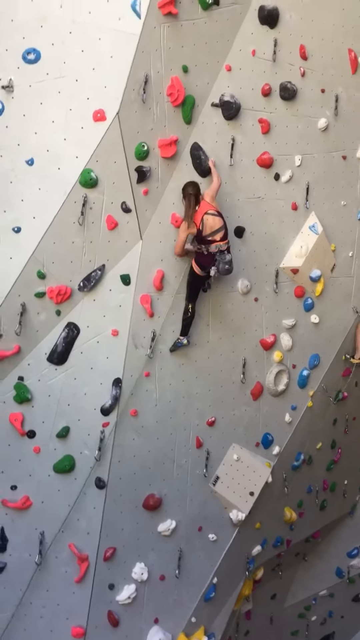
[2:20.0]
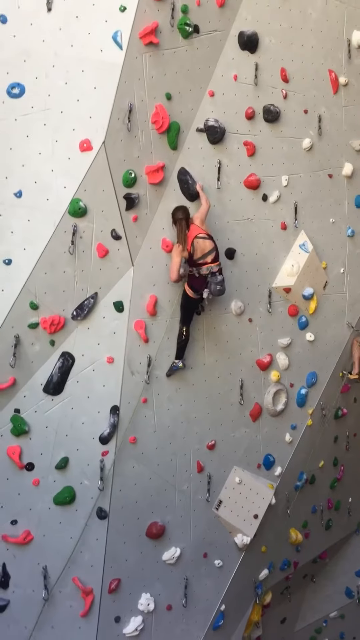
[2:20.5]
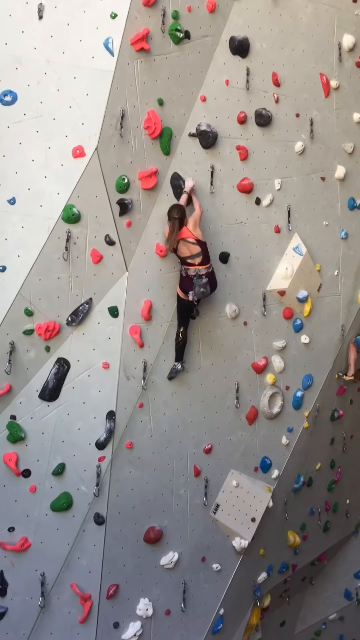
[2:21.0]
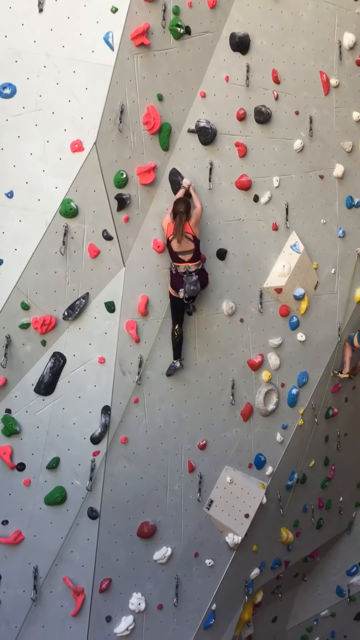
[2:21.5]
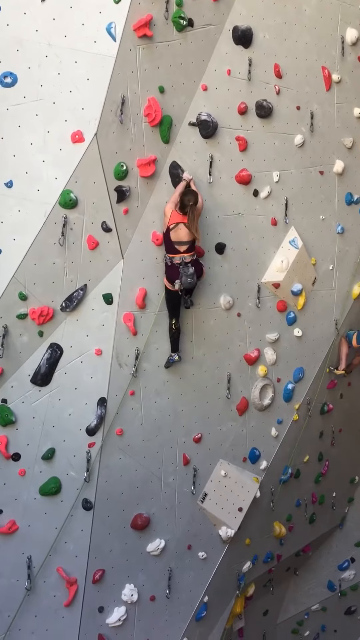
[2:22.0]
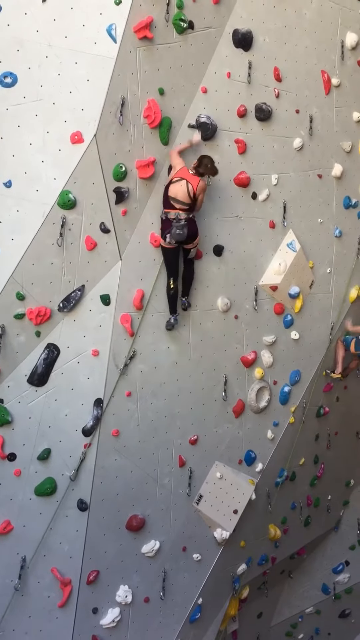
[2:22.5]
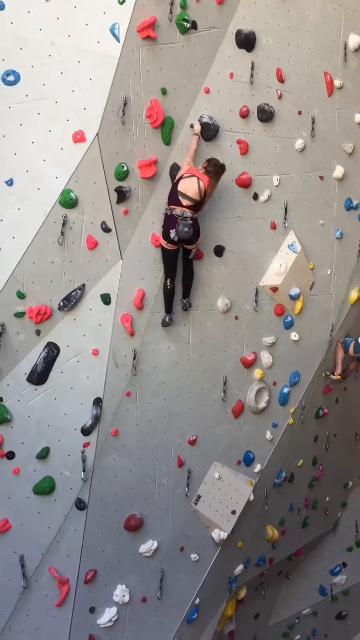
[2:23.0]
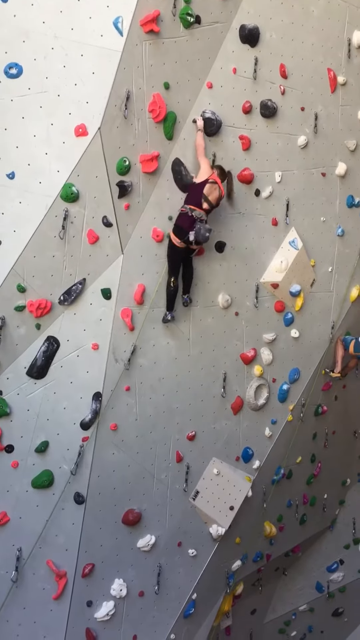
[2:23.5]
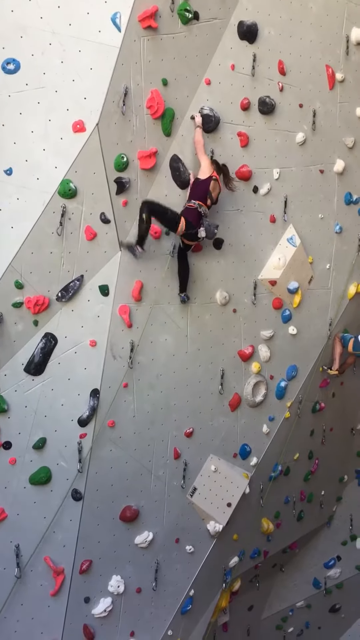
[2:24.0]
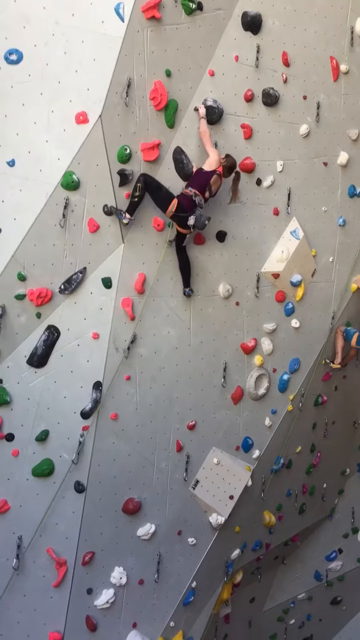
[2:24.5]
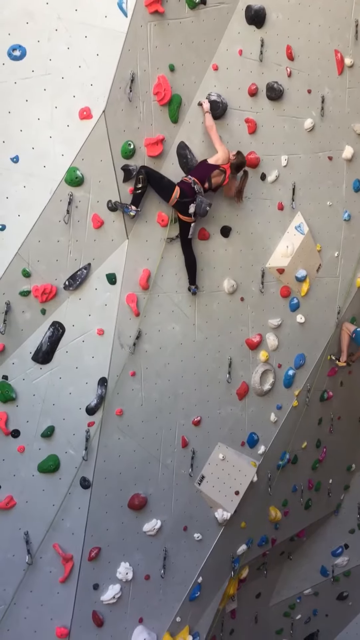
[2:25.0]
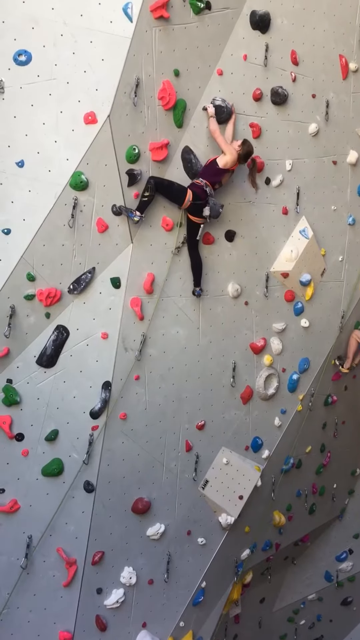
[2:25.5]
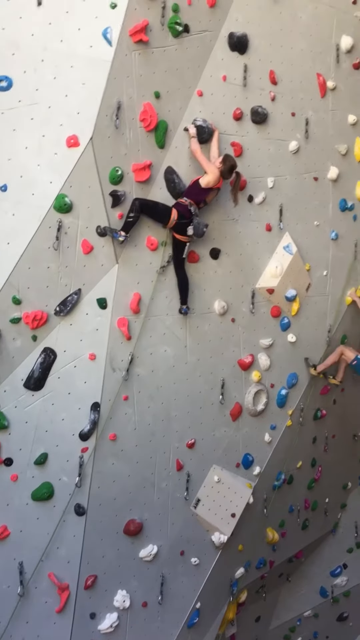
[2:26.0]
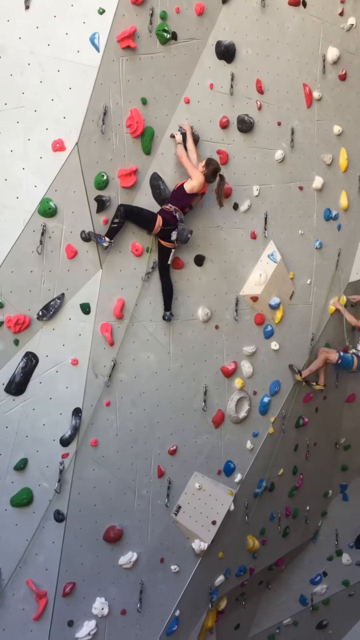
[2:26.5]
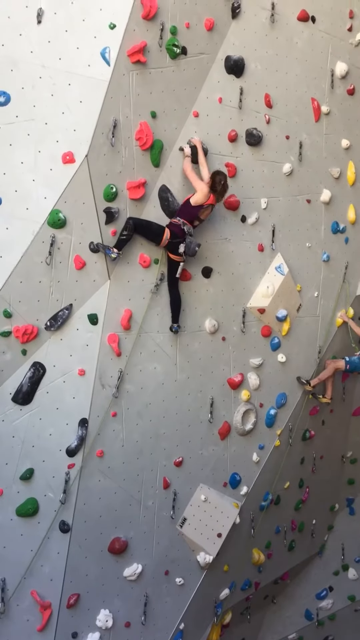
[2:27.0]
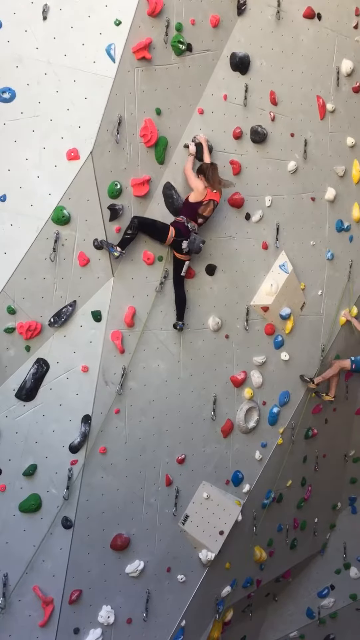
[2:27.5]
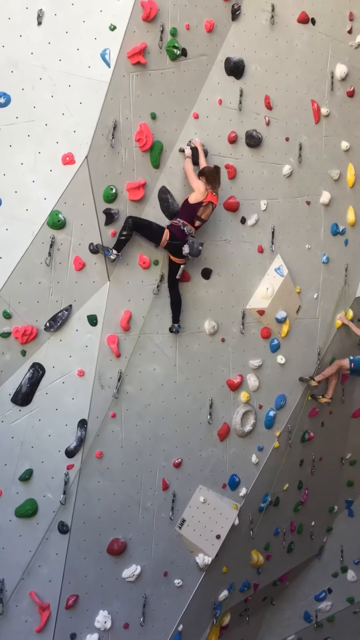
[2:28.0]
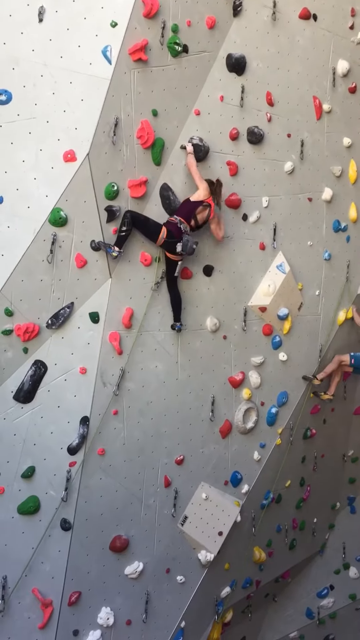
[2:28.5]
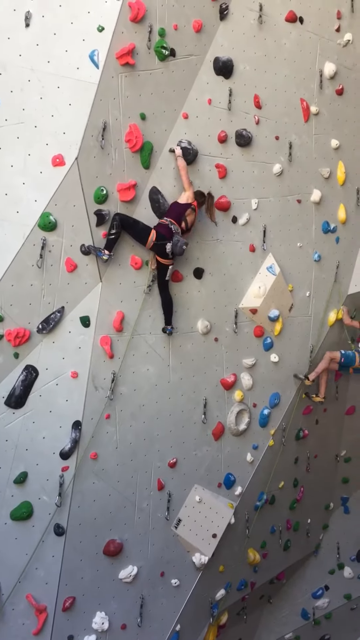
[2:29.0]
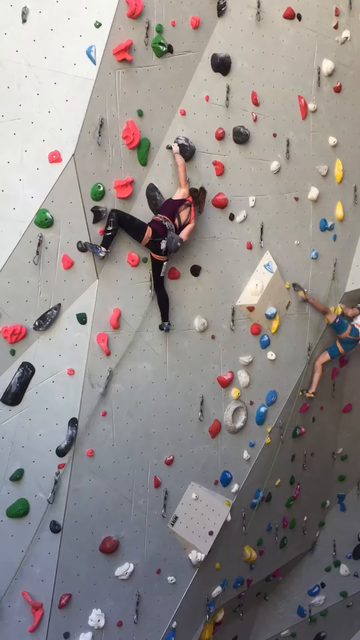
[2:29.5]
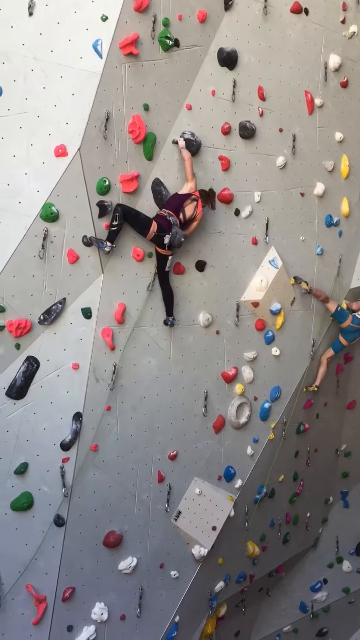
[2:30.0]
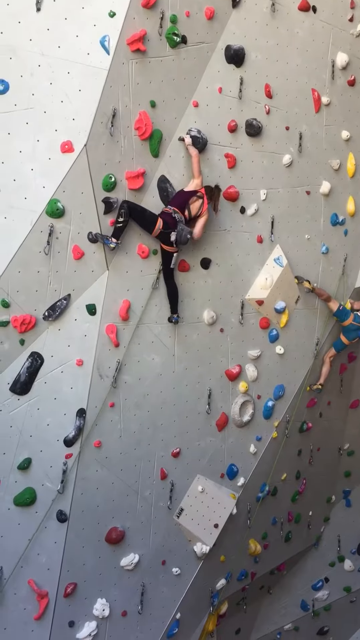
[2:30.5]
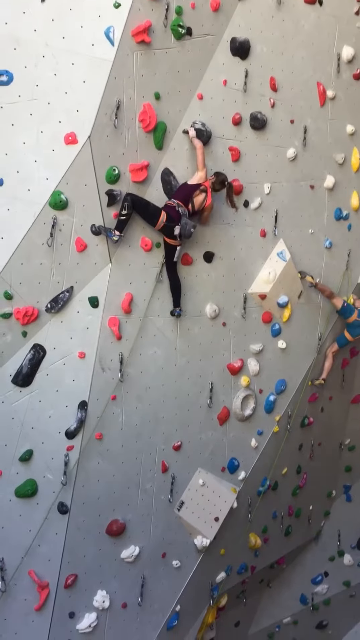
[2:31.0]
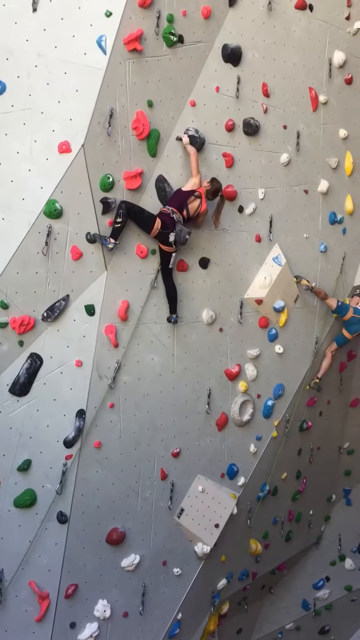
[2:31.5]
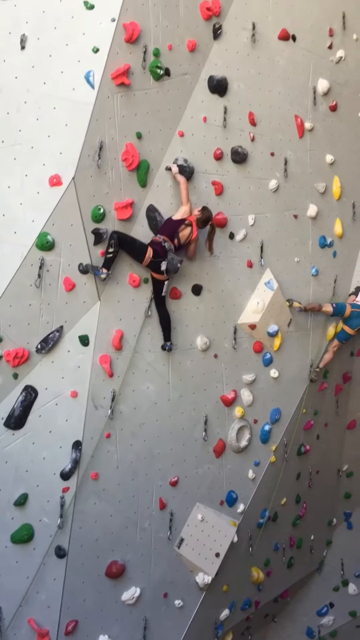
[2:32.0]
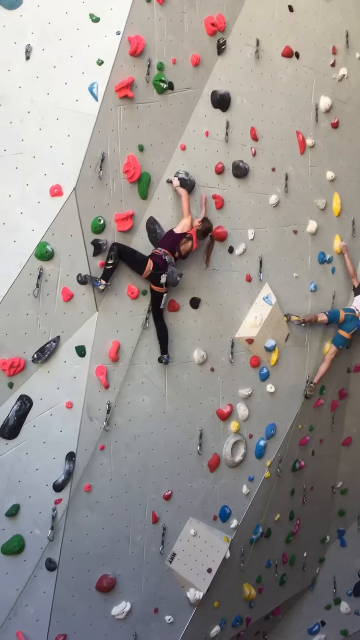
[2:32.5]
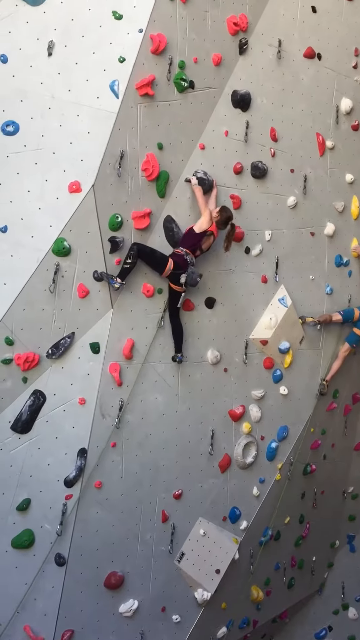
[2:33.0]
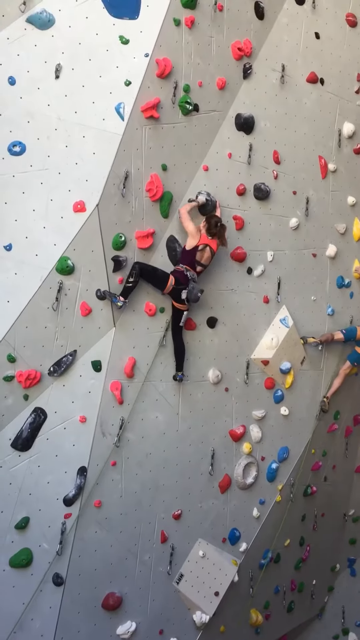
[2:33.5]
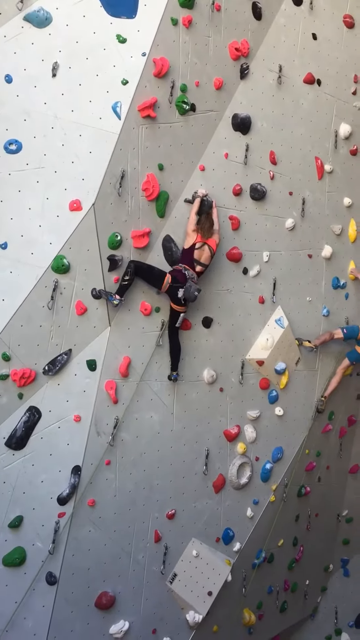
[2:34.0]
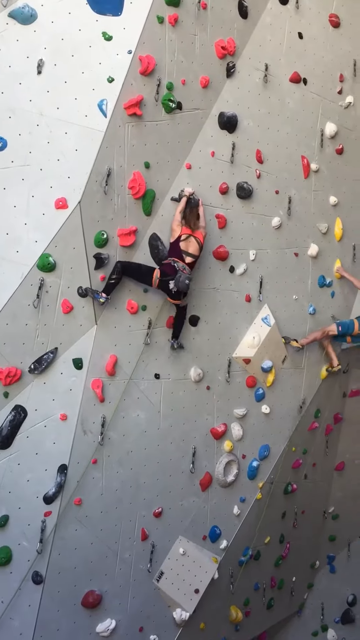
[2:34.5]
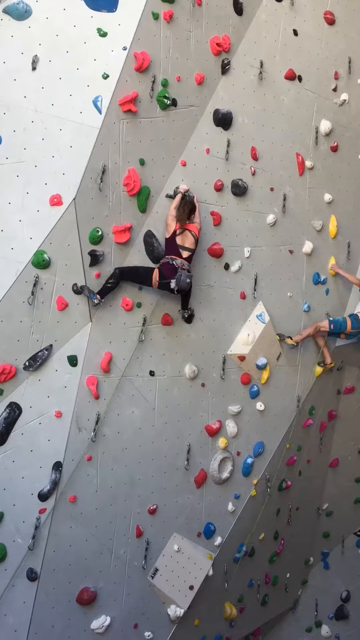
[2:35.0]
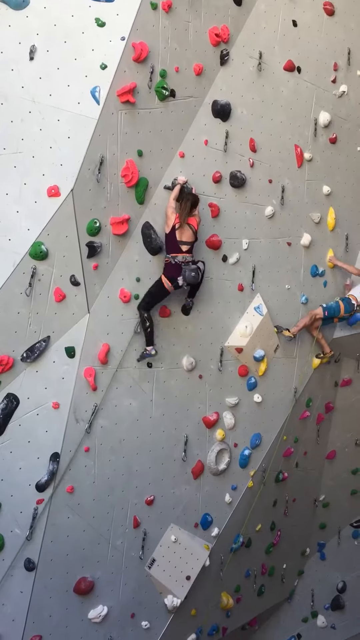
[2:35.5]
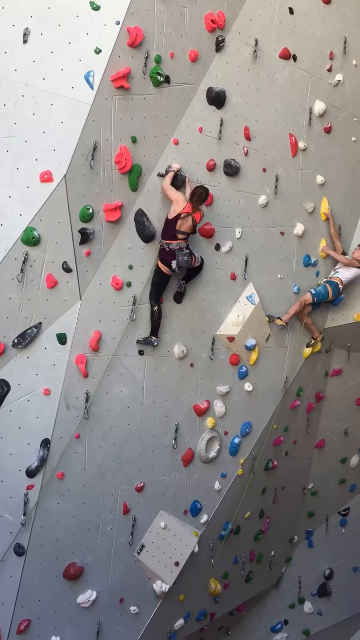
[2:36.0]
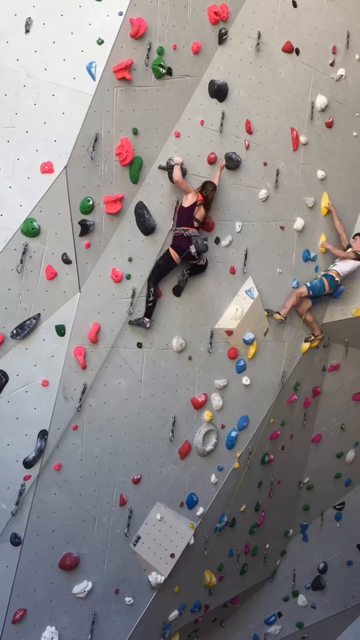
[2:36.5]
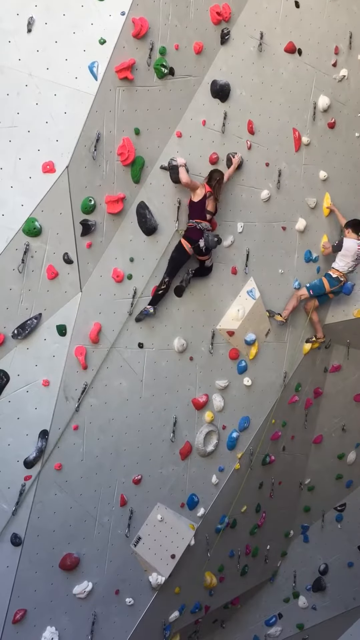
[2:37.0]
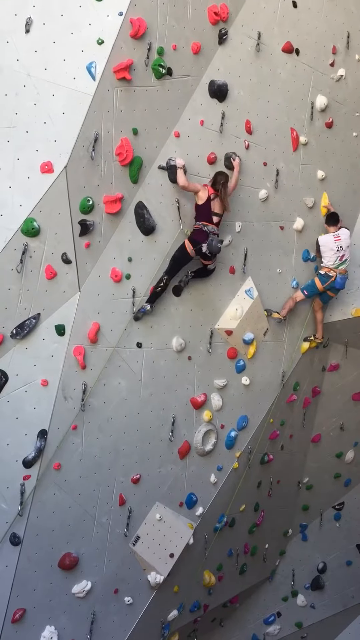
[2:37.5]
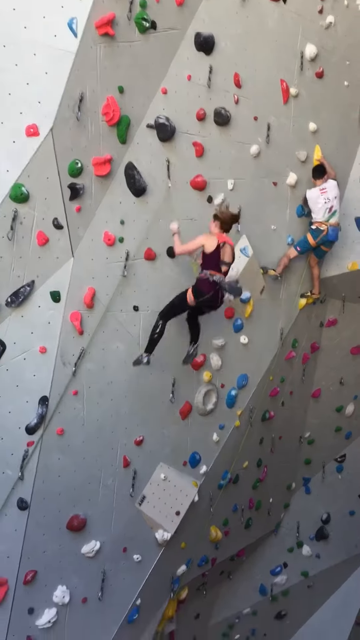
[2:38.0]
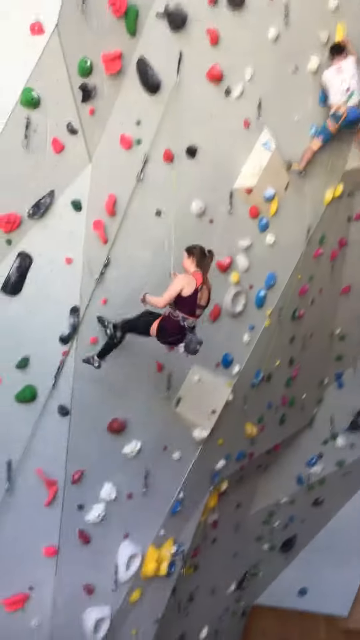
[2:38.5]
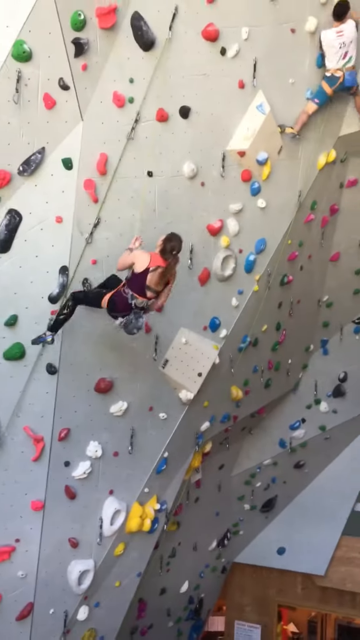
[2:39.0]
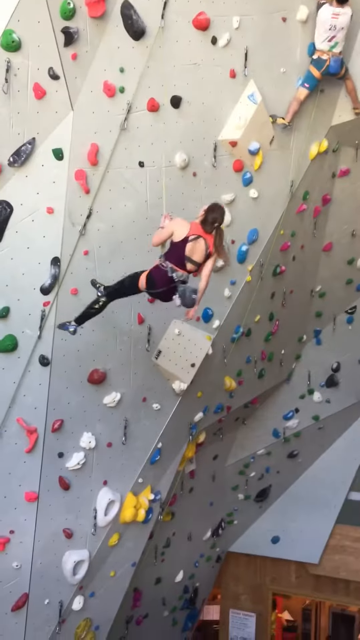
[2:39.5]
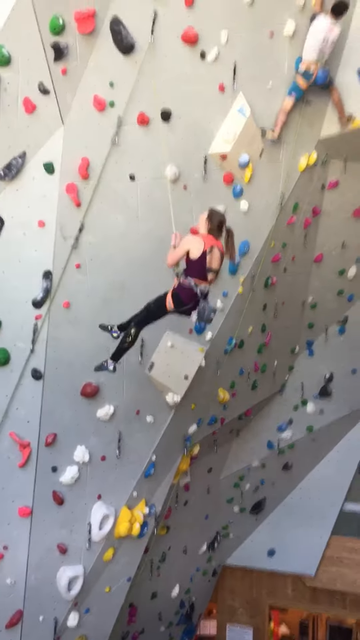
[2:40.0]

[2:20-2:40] A woman climbs a grey climbing wall covered in pink, green, black, blue, white, and yellow pieces and chains. She wears a pink shirt and black spandex, leggings, or pants, and has a bag on her back. Her left leg is straight under her and her right leg is bent against the wall, with both hands over her head holding the same black piece. She reaches up and pushes herself to grab a black piece above her with her left arm, swings her left leg up and bends her knee to balance, reaches up to the same black piece with her right arm, and straightens her right leg out under her. She grabs at and adjusts her harness chain, brings her left leg down and her right leg up, and reaches up to the right before she begins to fall. To her right, the man in a white shirt and blue pants is still climbing, his hand on a yellow piece. The woman falls back and bounces against the wall once before she is seen safely suspended on her harness rope.